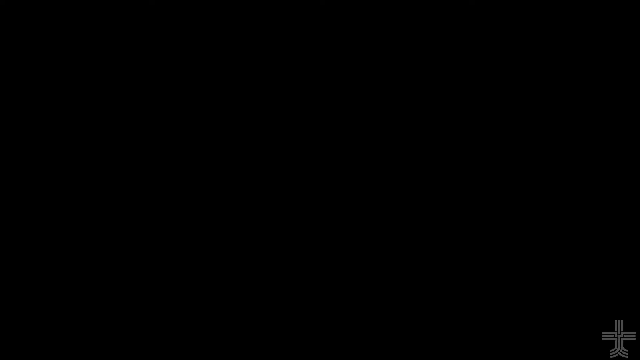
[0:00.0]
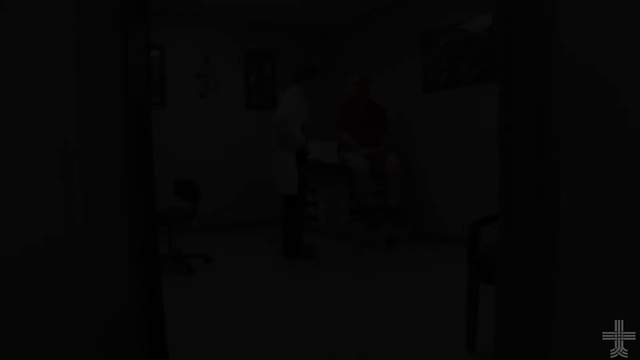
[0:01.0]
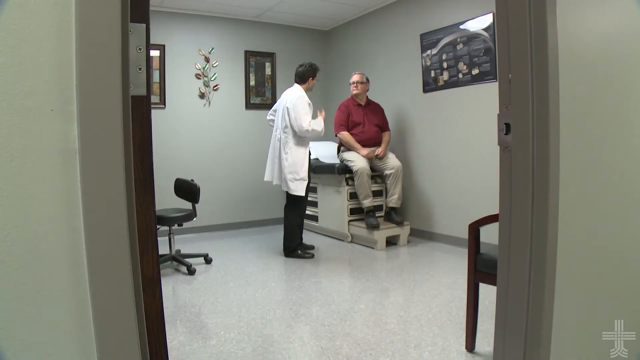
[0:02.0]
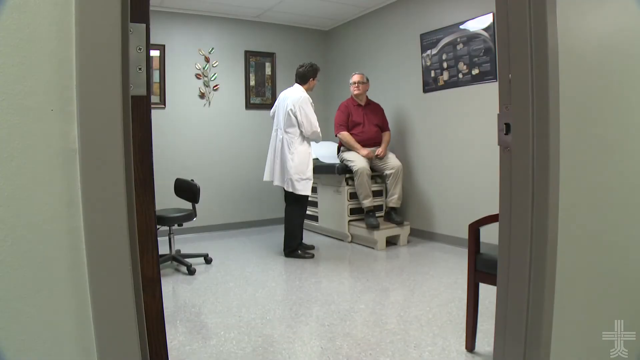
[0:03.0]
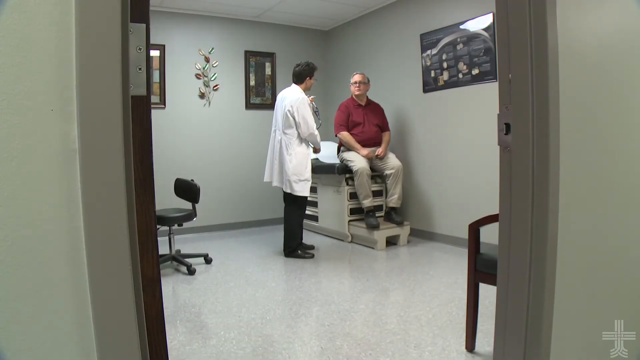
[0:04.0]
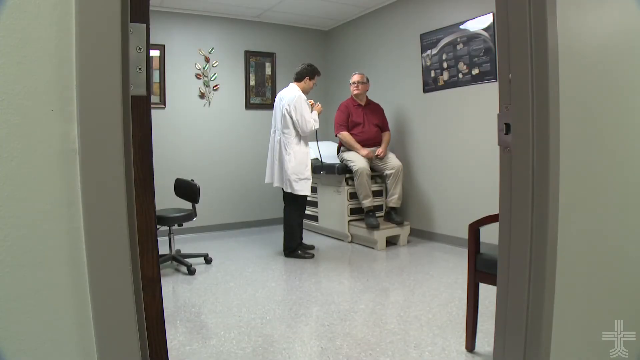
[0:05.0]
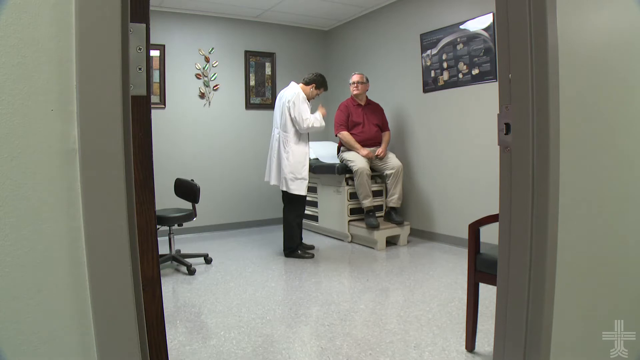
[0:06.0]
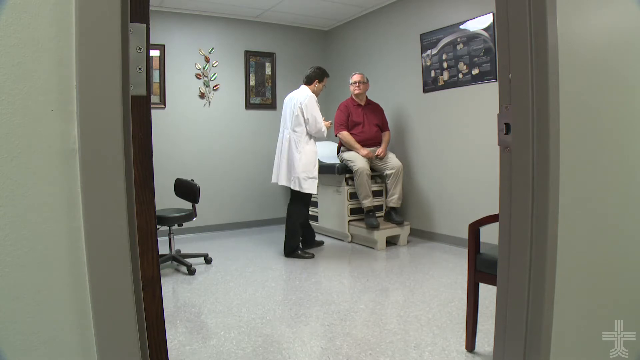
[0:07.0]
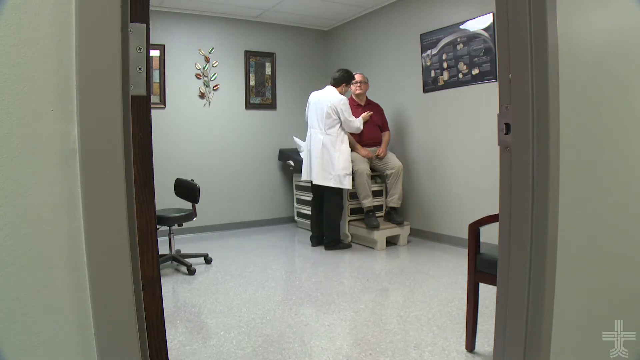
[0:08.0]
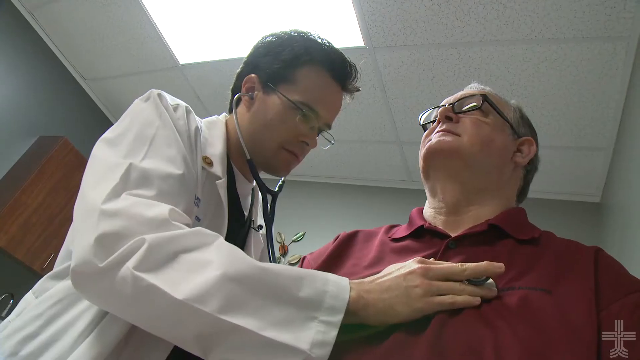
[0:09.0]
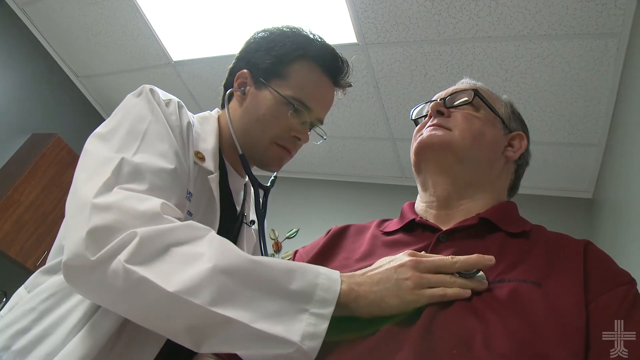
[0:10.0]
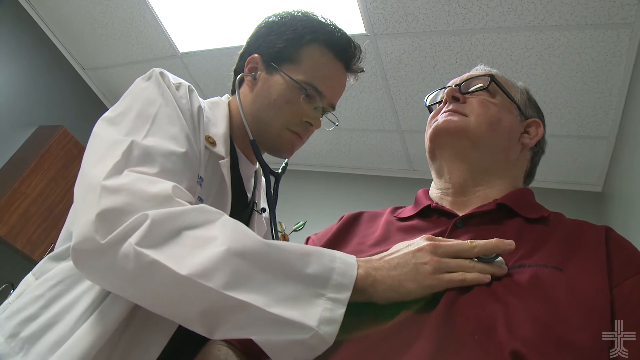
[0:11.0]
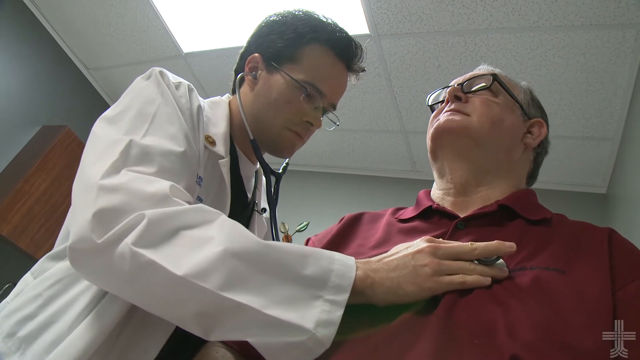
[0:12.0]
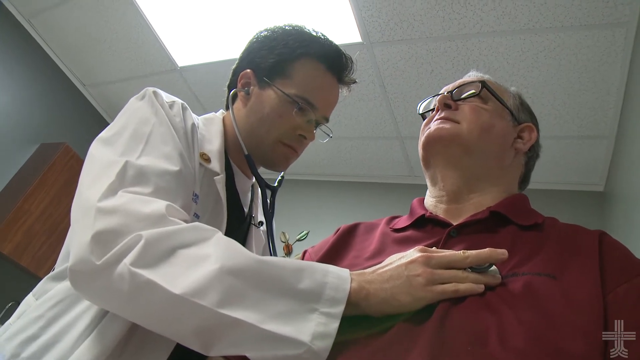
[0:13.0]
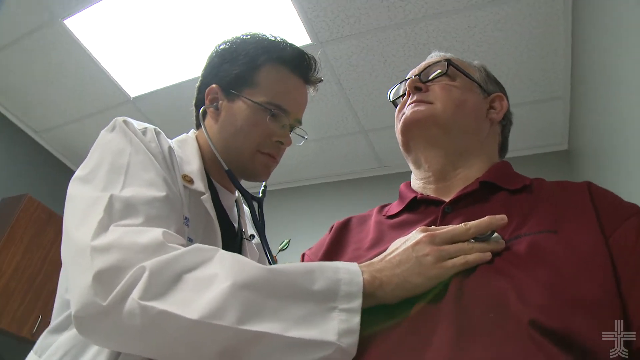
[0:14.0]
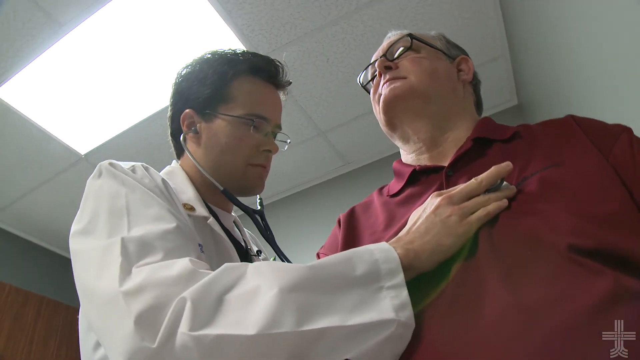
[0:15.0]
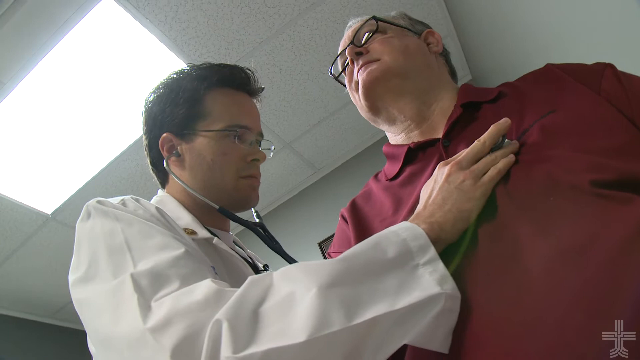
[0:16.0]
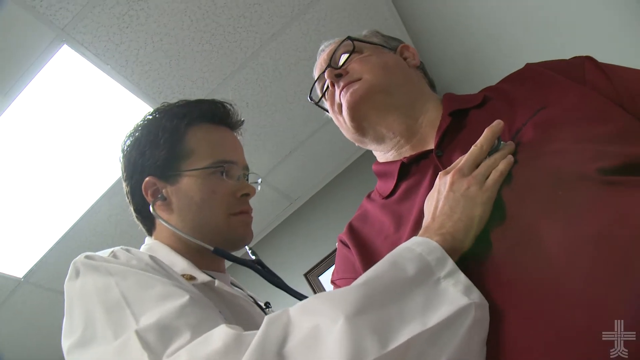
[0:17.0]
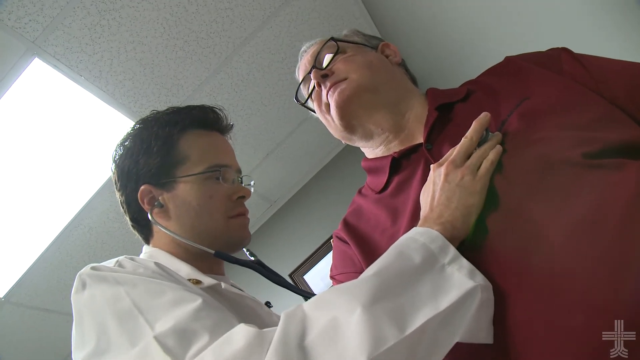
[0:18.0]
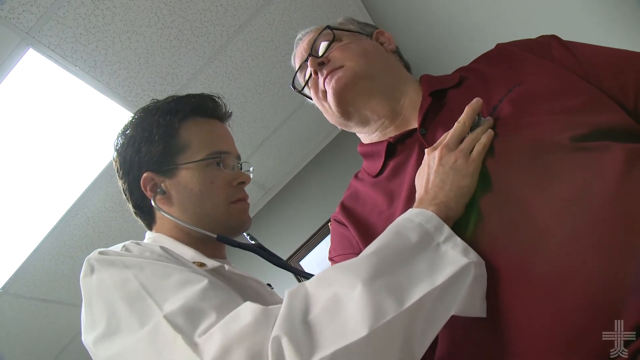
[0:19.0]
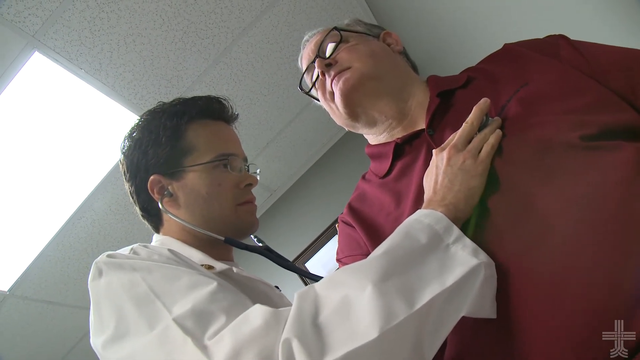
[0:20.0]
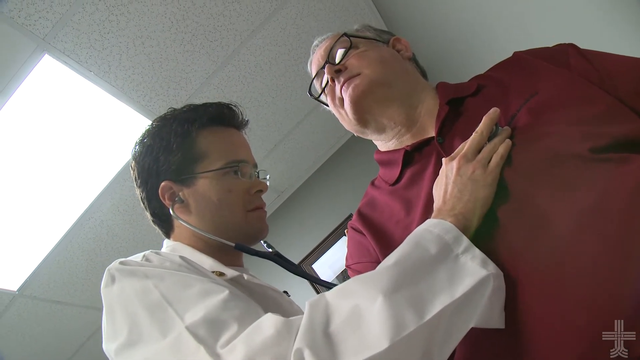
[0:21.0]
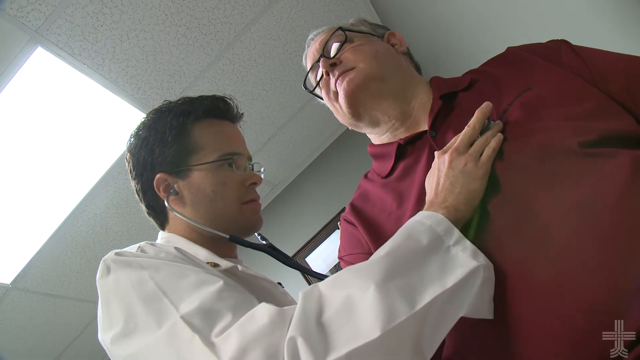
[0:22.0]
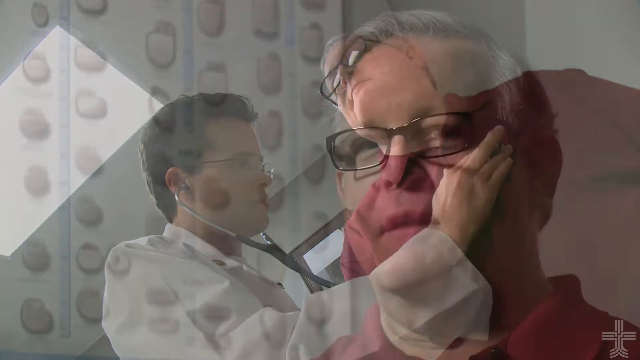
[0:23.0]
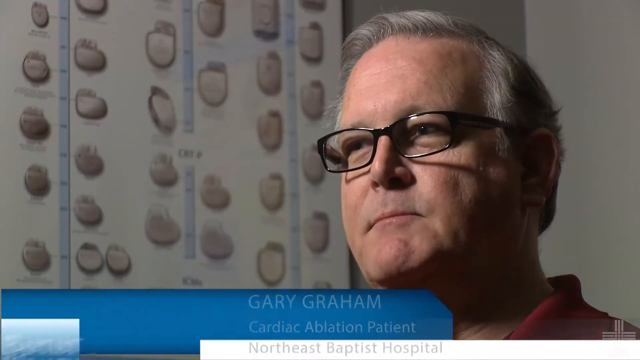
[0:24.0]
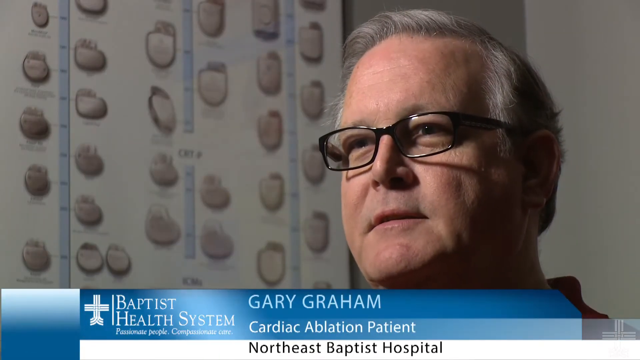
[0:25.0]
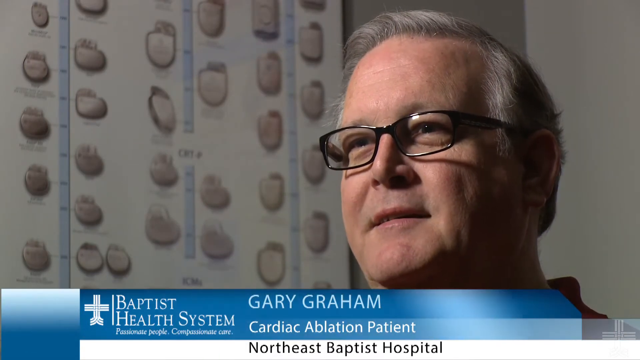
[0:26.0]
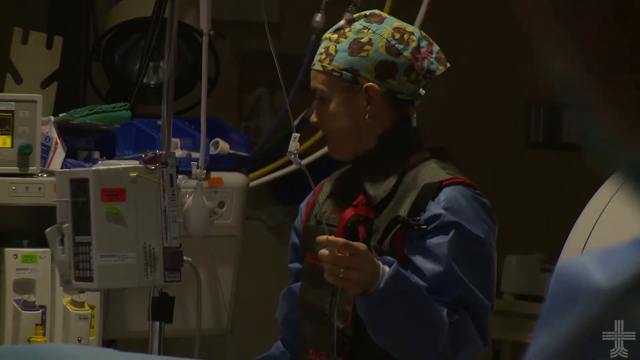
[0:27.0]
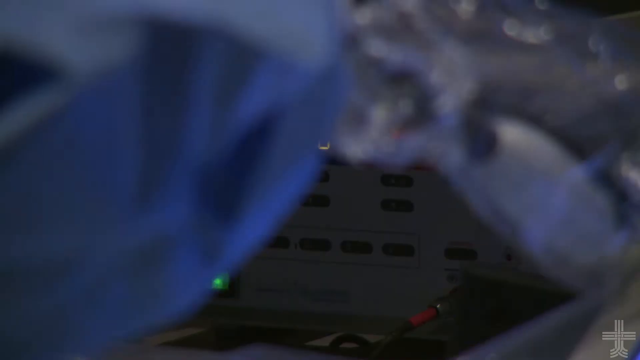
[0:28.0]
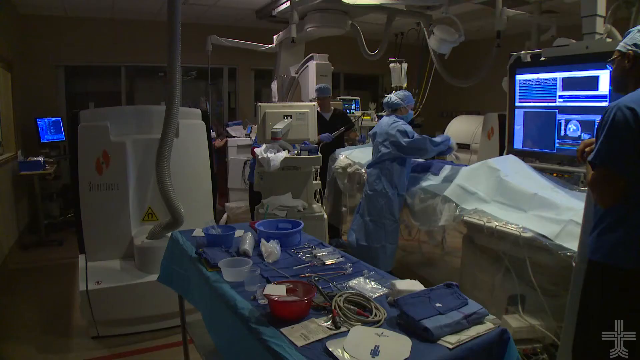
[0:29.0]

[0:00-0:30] A doctor or medical professional speaks to a patient in a doctor's office. The patient sits on the exam table, which is covered with white paper; the table has a brown leather top and an off-white bottom that looks like it has some drawers, plus a bottom part that pulls out so the patient can rest his feet on it. The patient wears a maroon polo shirt, khaki pants and dark shoes that look either very dark brown or black; he has gray hair and wears glasses. The medical professional wears black shoes, black pants and a white lab coat, has dark hair and also wears wireless glasses. He puts a stethoscope into his ears, places the listening part over the patient's heart, and leans over the patient while counting or listening to the heartbeat. The camera shifts a little so the focus is on the medical professional listening to the man's heart. The view then shifts to the patient speaking; his name is Gary Graham, a cardiac ablation patient at the Baptist Health System, Northeast Baptist Hospital. He is smiling. The view then shifts to what looks like a medical procedure, possibly a cardiac ablation: someone in surgical gear with a scrub cap holds a bulb in their hand, and a couple of pieces of medical equipment are in the background.